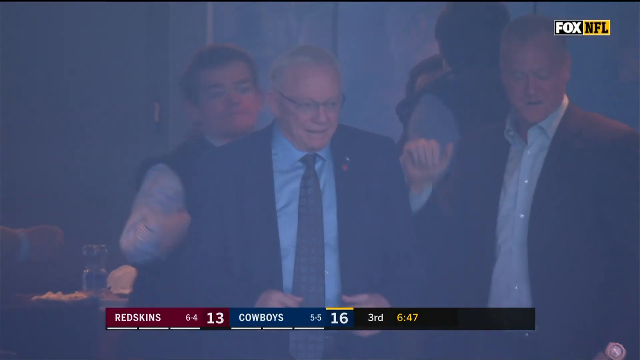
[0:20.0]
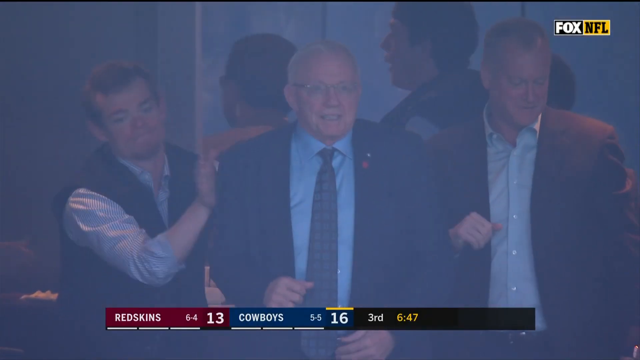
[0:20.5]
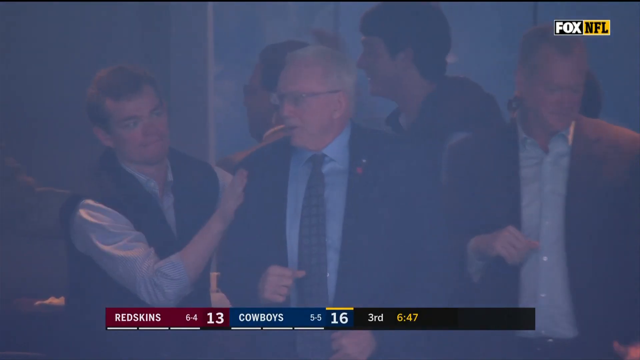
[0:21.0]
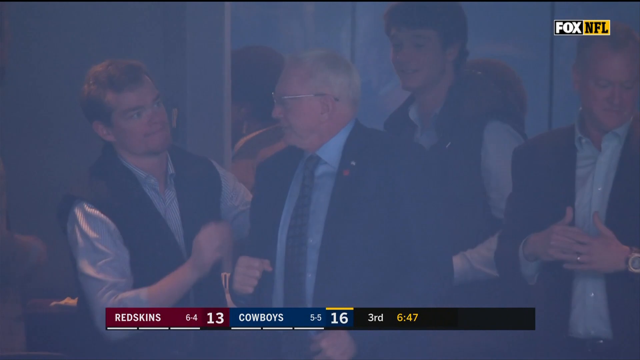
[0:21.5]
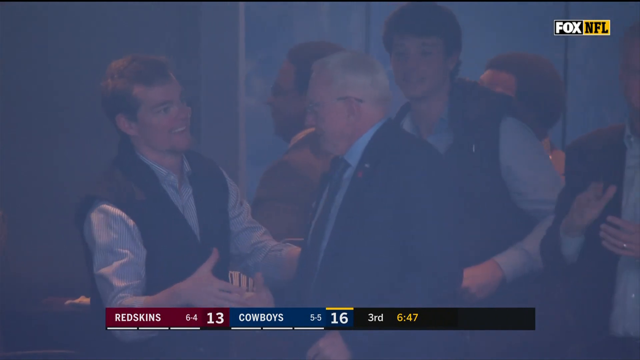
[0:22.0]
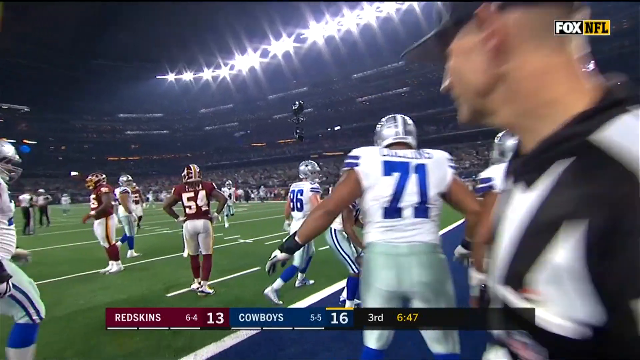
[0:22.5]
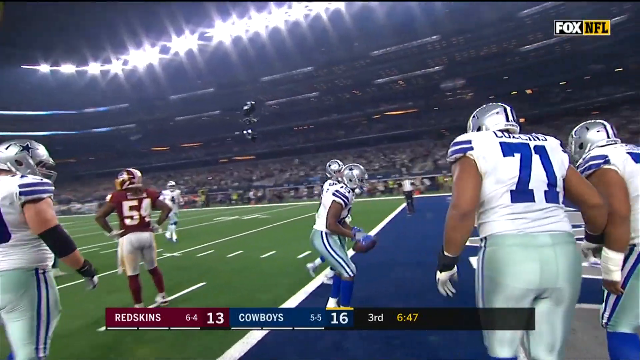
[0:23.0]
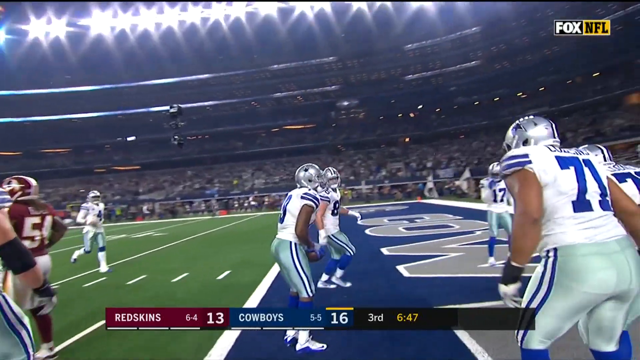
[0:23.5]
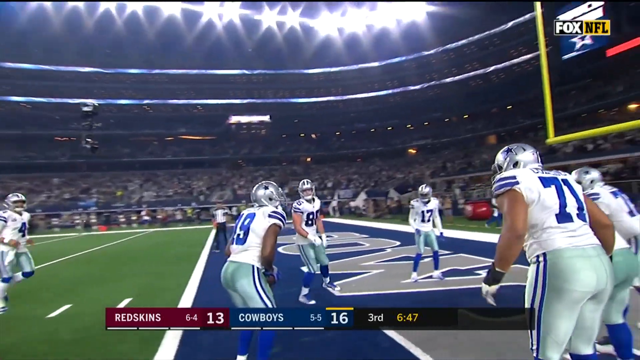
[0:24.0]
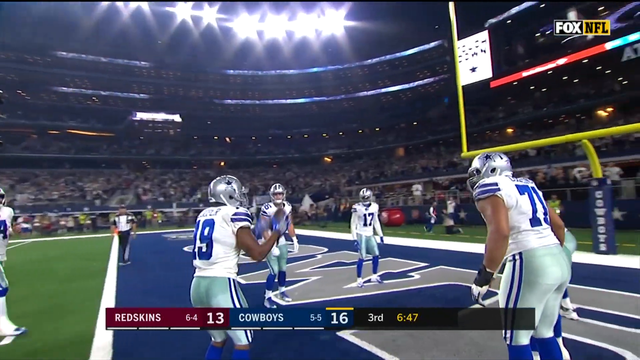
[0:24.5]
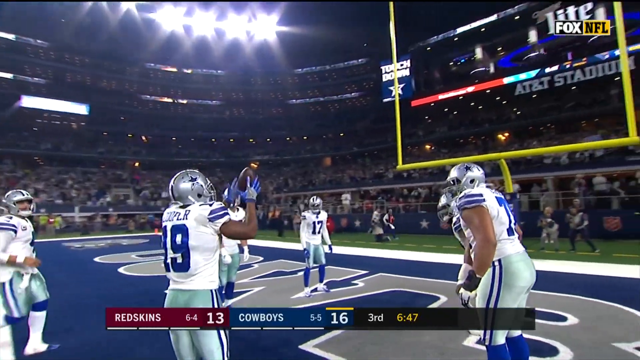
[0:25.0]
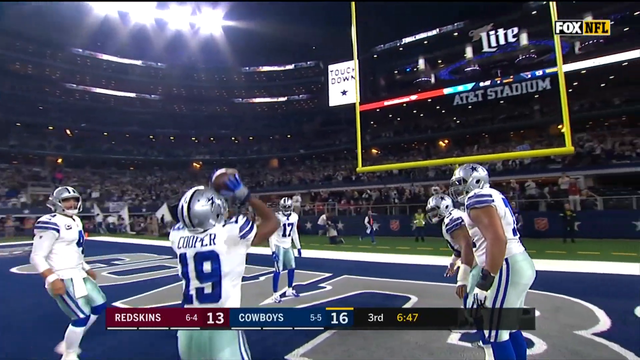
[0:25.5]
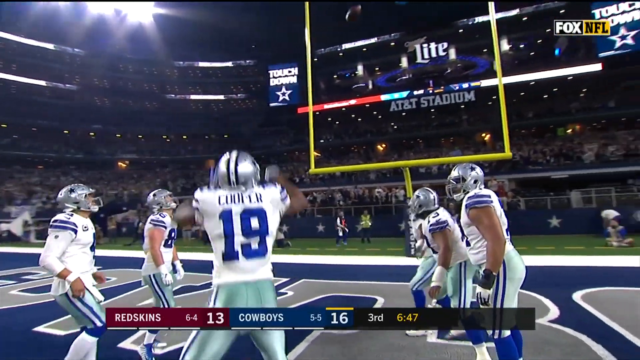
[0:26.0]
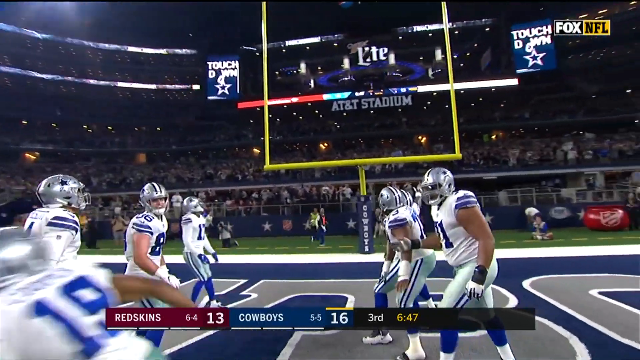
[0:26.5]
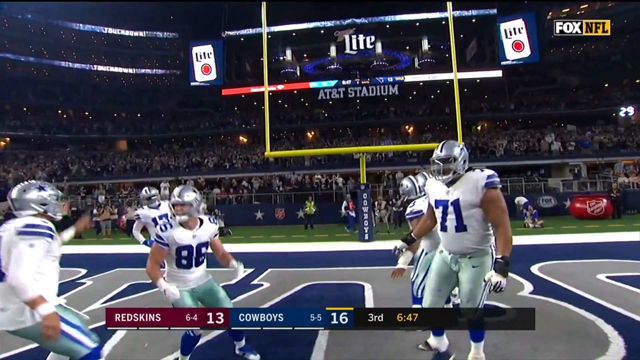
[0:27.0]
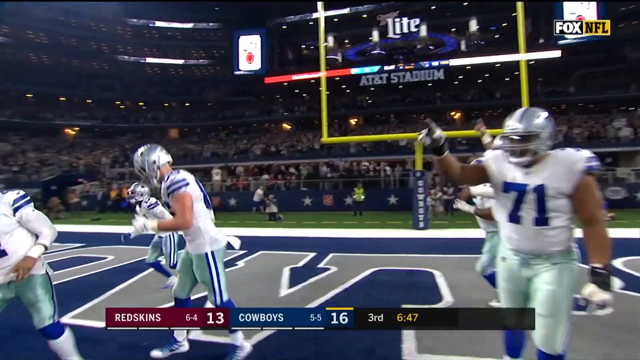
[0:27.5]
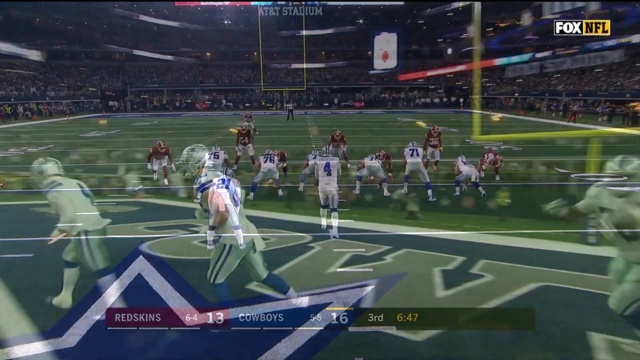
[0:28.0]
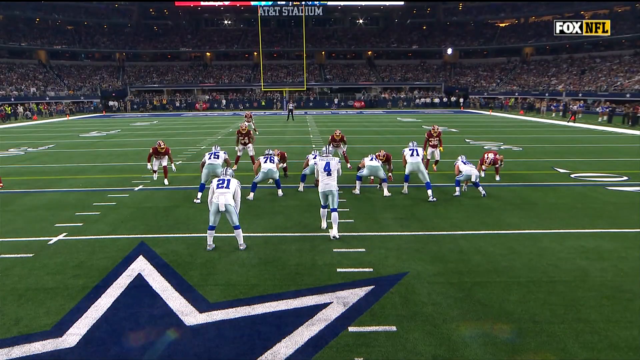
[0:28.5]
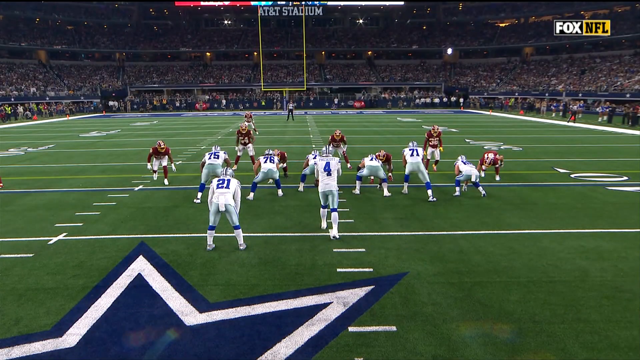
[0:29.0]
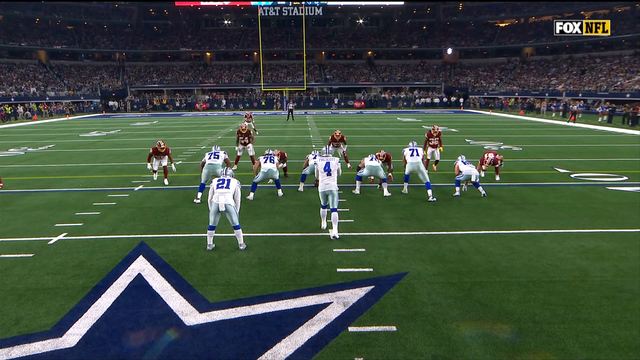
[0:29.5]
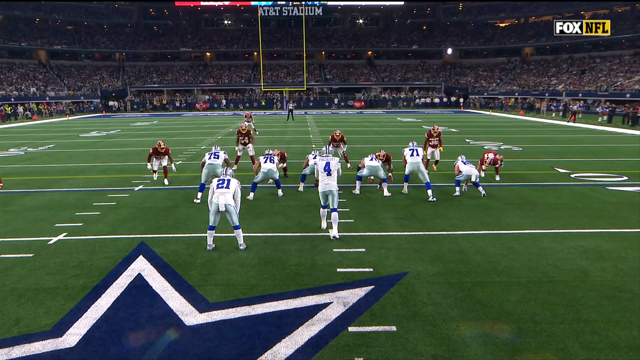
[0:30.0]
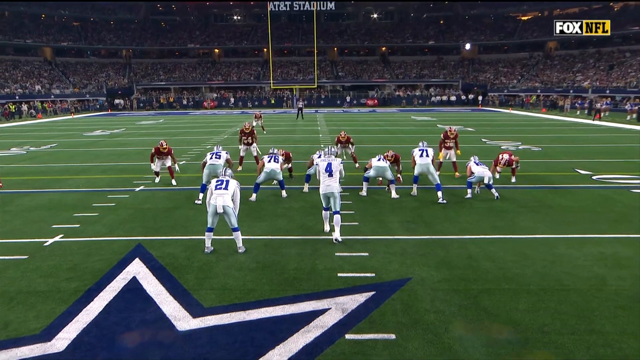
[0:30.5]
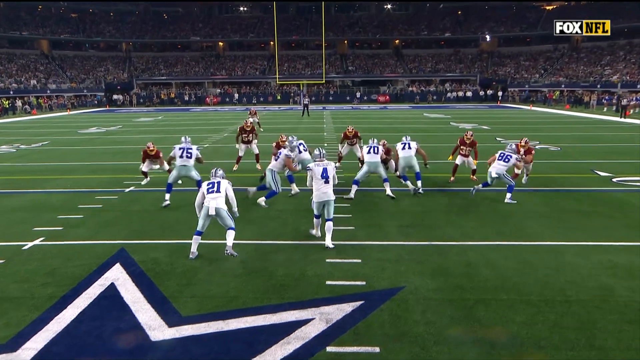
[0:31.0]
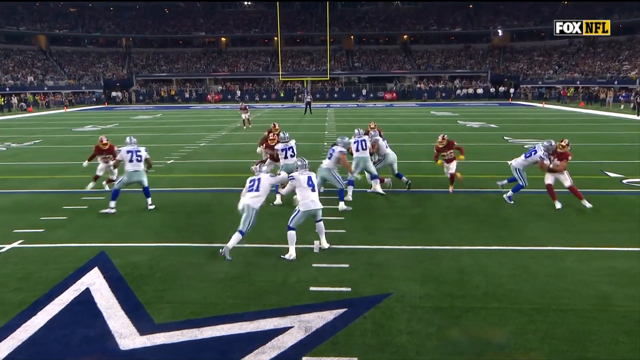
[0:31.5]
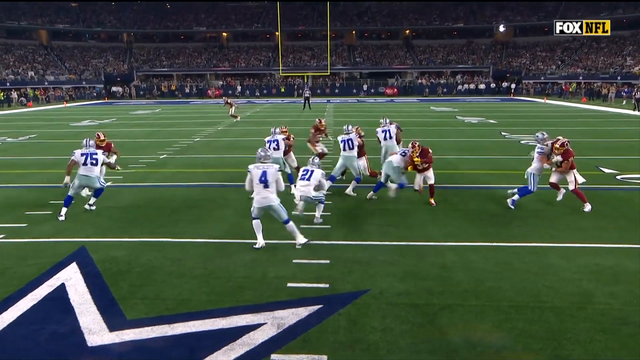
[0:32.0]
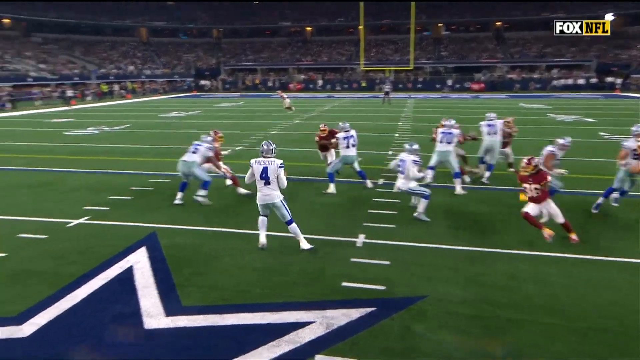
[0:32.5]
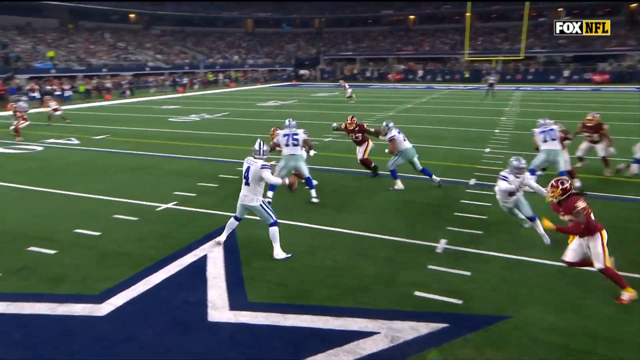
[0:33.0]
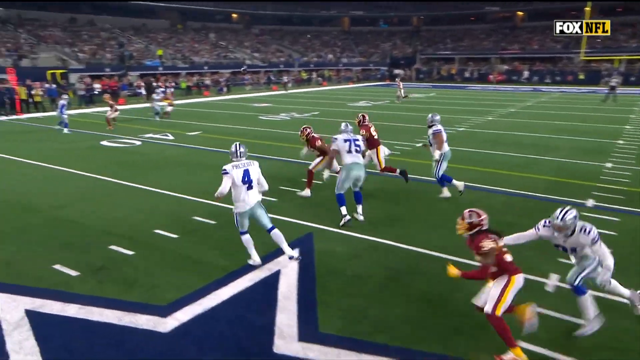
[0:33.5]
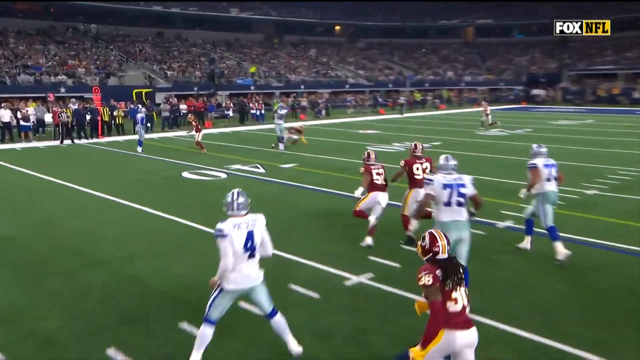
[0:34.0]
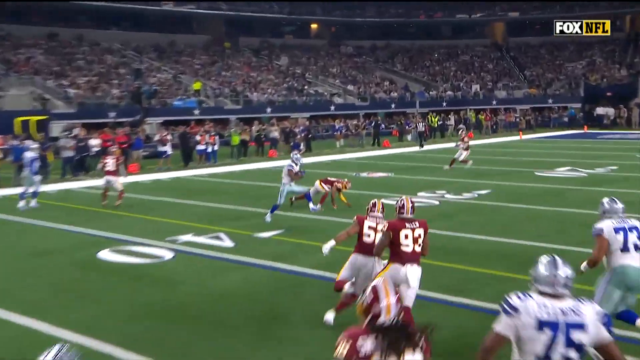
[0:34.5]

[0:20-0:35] A younger person pats Jerry on the back, on the shoulder. Amari Cooper does a celebration apparently copying Markelle Fultz's free throw, shooting the football into the goal. Dak fakes the handoff to the running back, slides his feet left and throws to Amari Cooper. Cooper's defender falls, leaving a big hole in the defense, and Cooper goes an easy 20 yards down the line with no one able to catch him. Cooper, wearing number 19, and the Cowboys are in white with blue because they are at home, while the Redskins wear dark red with yellow.